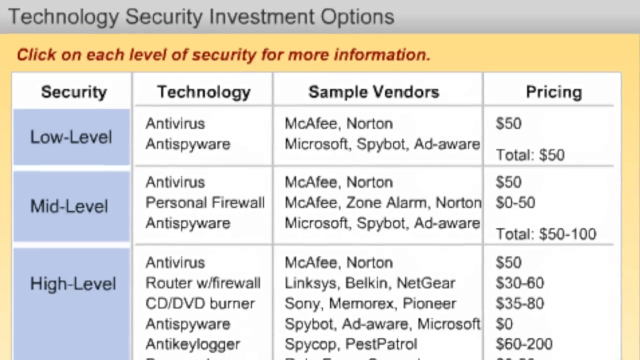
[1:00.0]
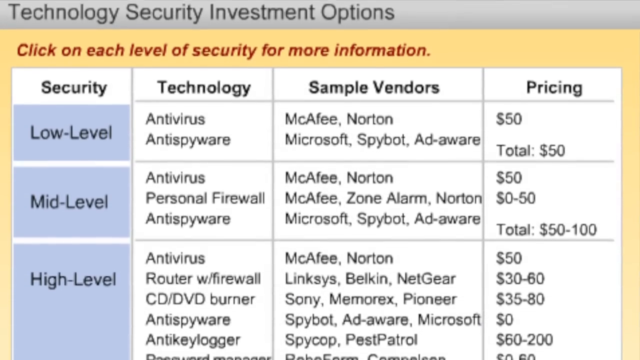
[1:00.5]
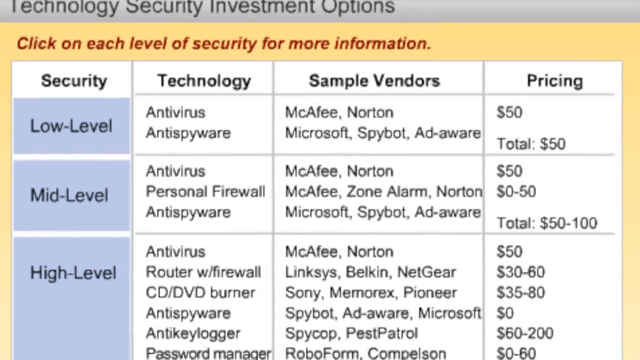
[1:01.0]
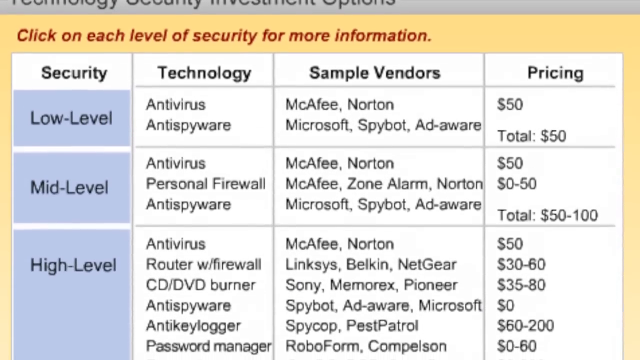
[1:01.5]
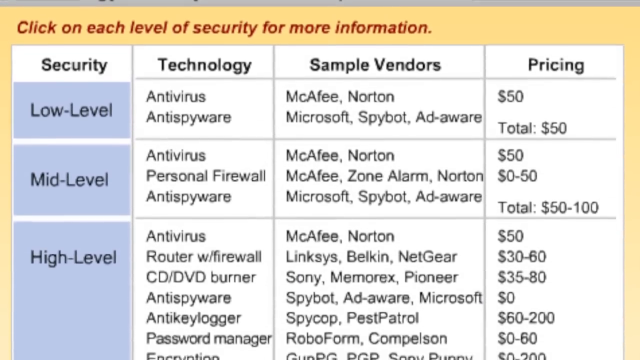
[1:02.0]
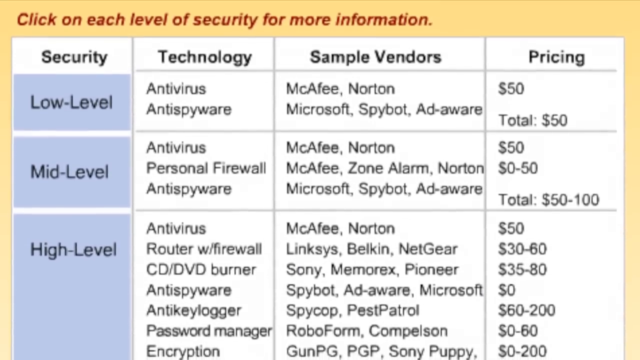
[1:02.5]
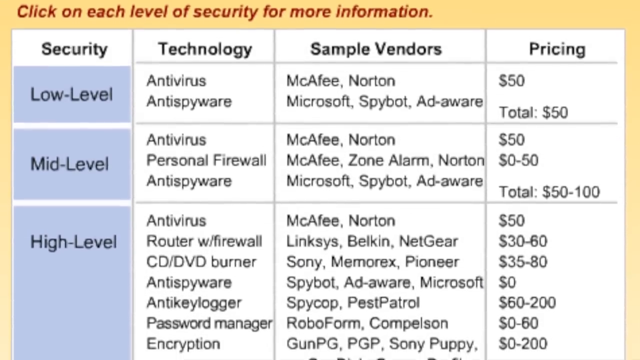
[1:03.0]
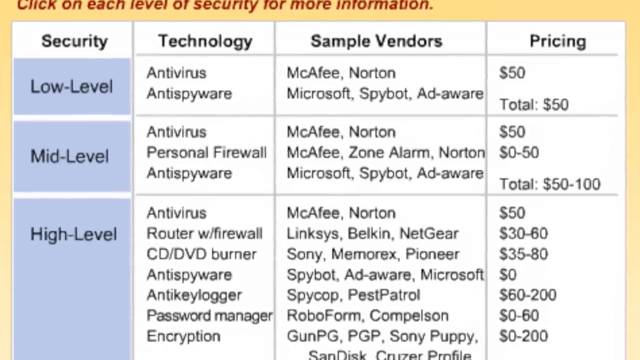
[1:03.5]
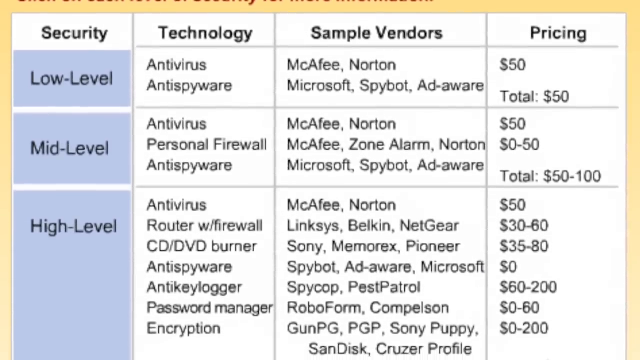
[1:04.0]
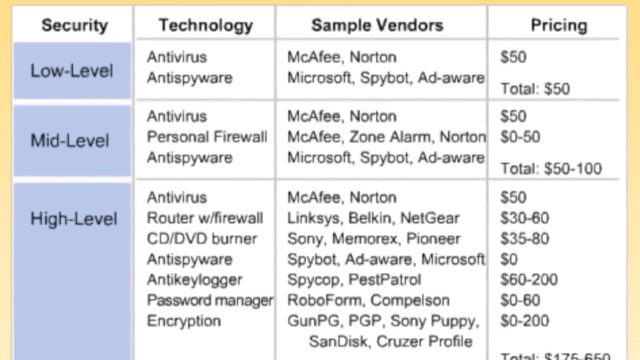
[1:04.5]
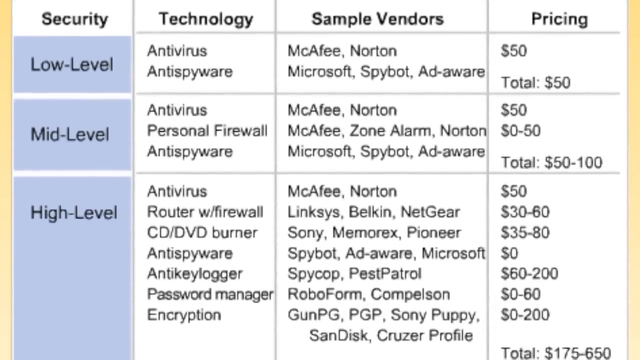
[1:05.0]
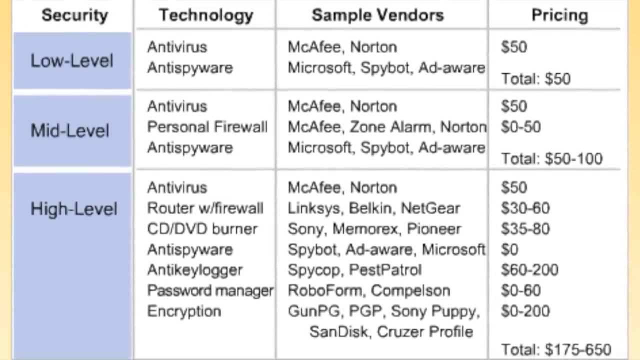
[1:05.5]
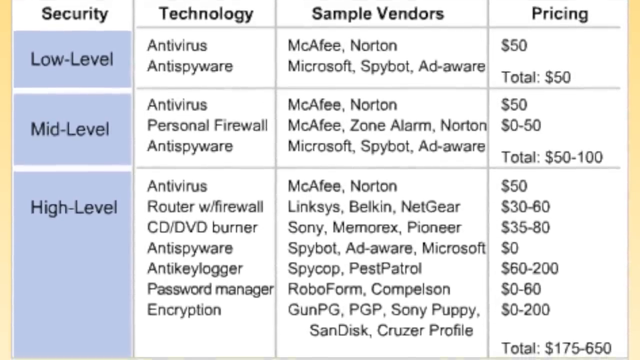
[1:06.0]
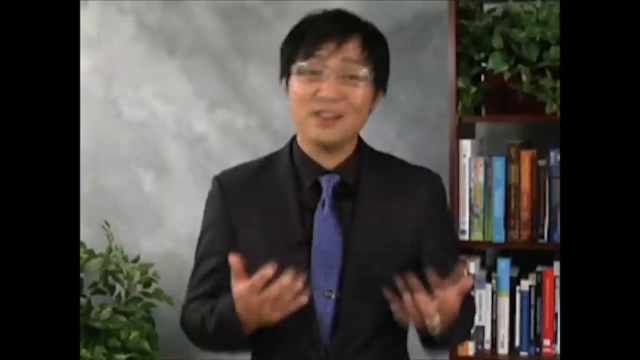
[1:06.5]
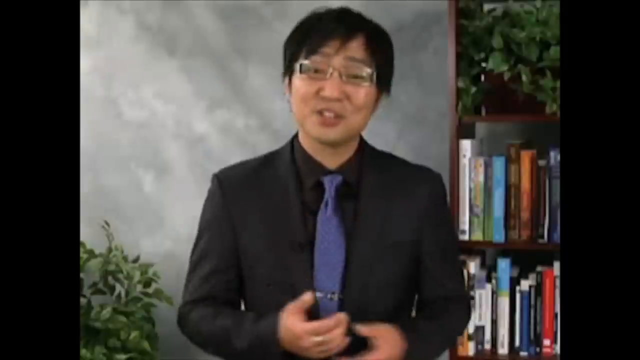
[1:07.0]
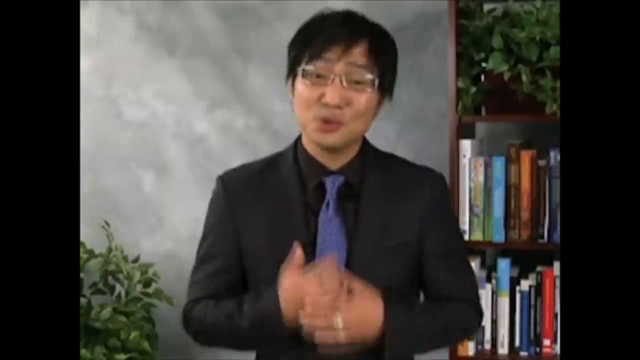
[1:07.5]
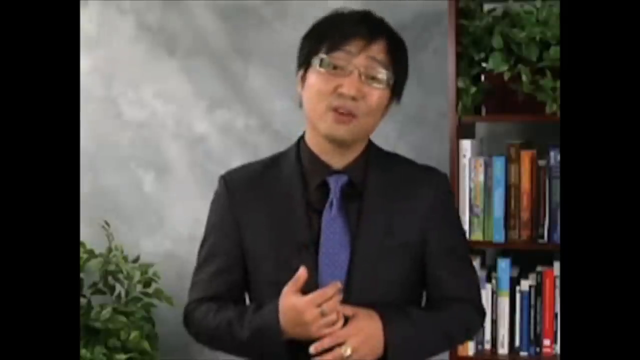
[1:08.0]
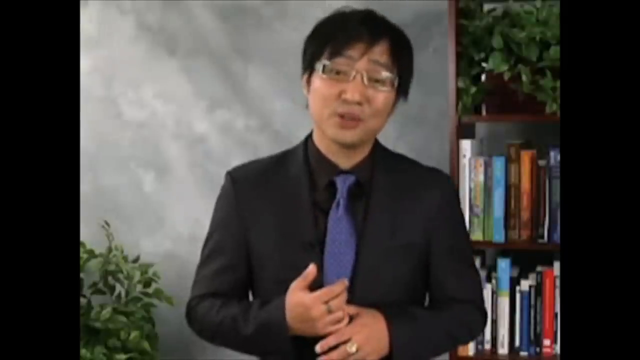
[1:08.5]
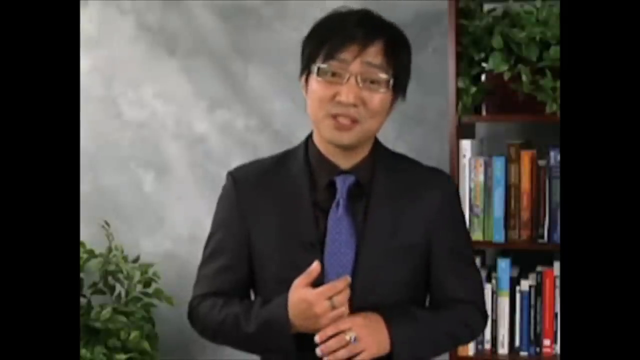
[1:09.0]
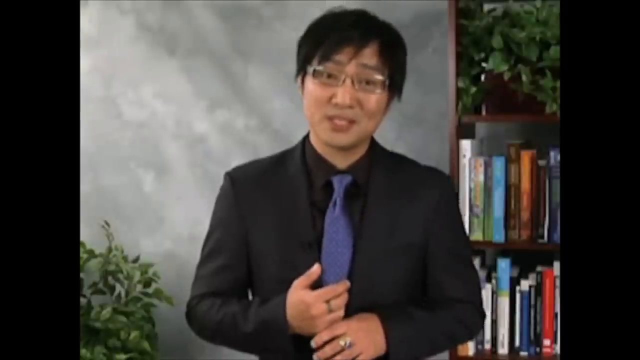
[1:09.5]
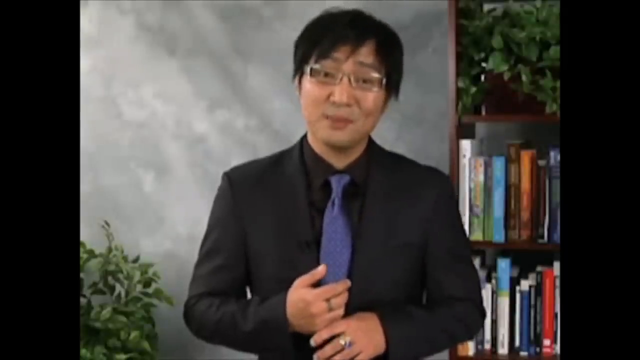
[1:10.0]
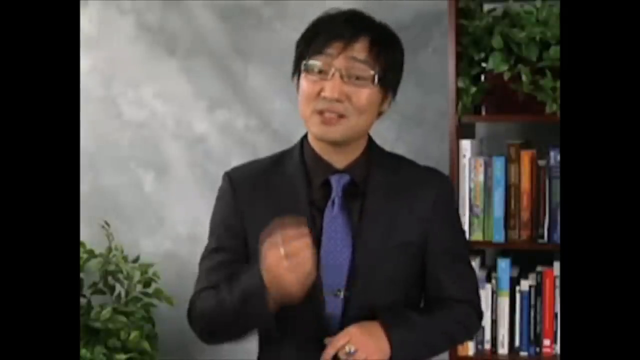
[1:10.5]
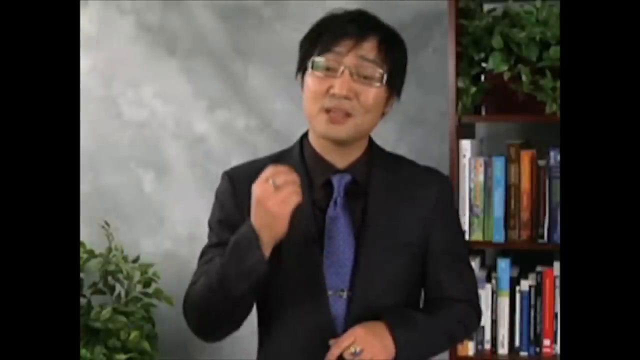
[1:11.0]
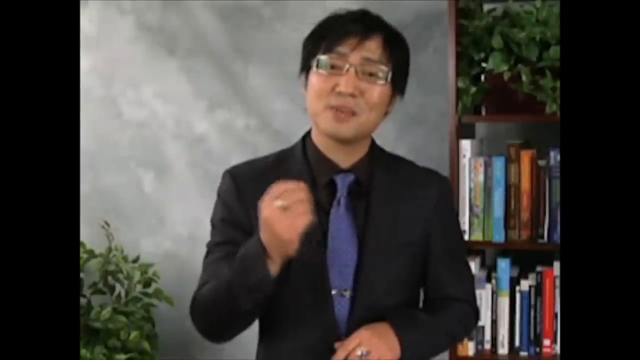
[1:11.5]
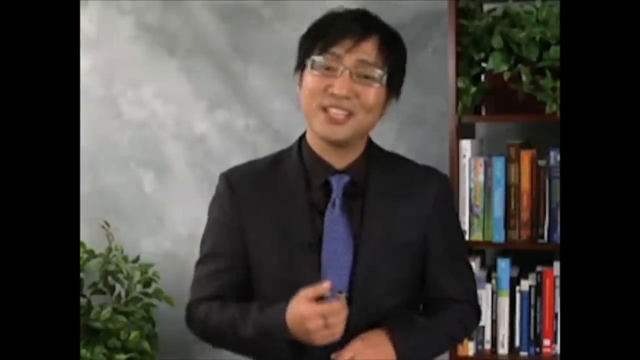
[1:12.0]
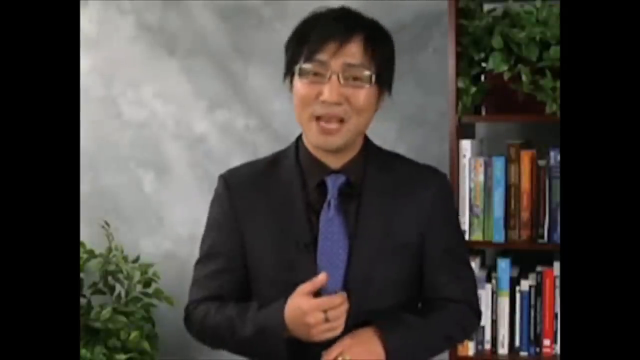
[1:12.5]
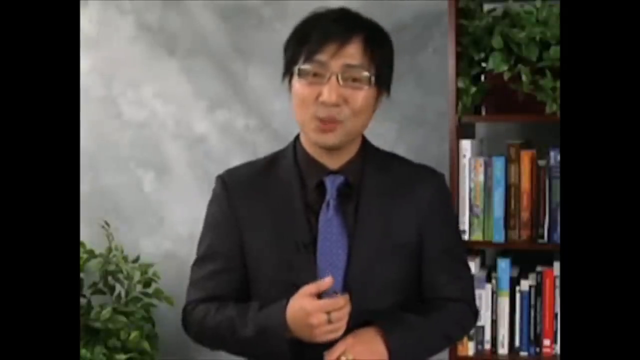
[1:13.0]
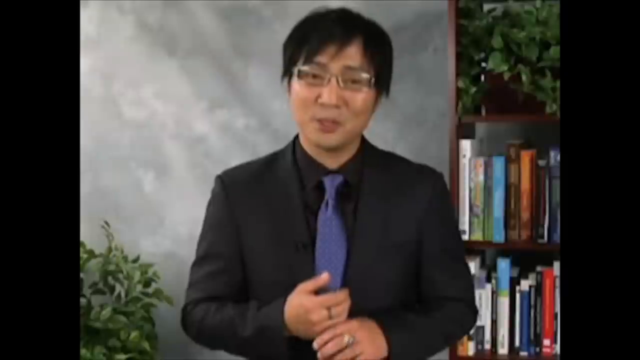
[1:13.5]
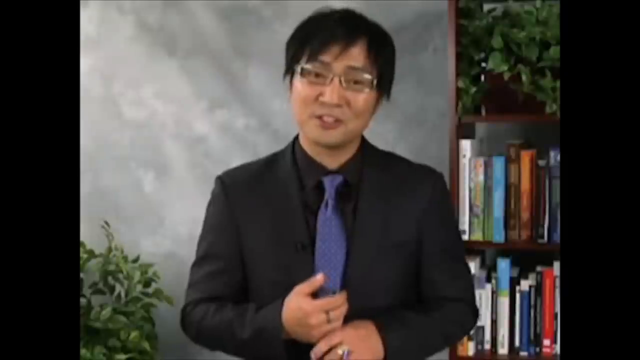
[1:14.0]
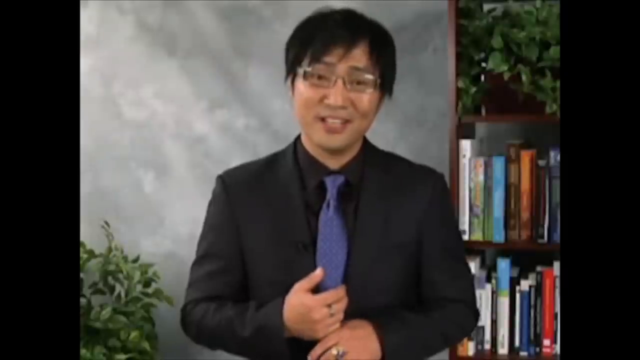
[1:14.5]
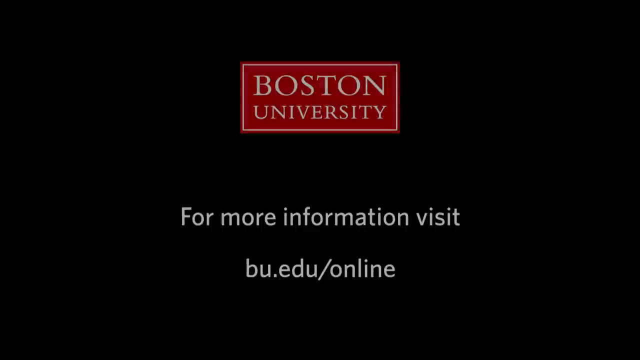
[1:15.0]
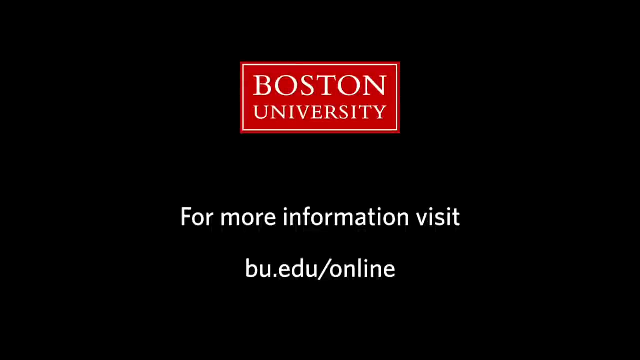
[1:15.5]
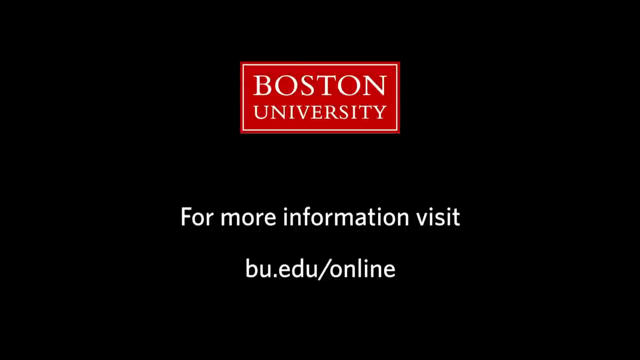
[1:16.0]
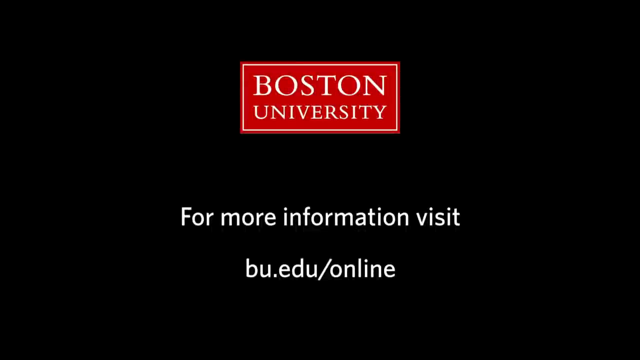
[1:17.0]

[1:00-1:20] A table appears with the headline "Technology Security Investments", arranged in rows and columns. The first row contains security, technology, sample vendors and pricing, and each section is filled with information going downwards, all written in black. The table moves up, and then a man looks toward the camera against a gray background, with a bookshelf holding books and plants behind him and more plants in the left corner. He keeps talking, lifting one of his hands to emphasize his point. The next page shows "Boston University" in white on a red caption background, along with a link to the university's website.